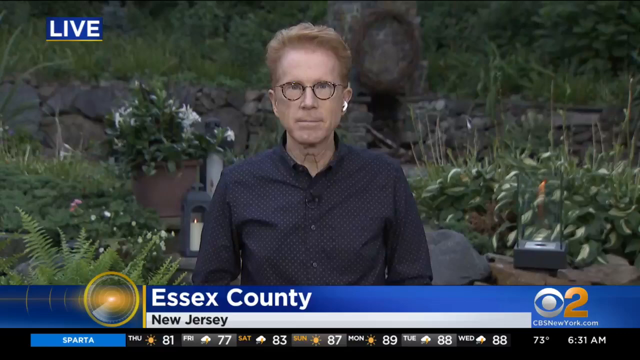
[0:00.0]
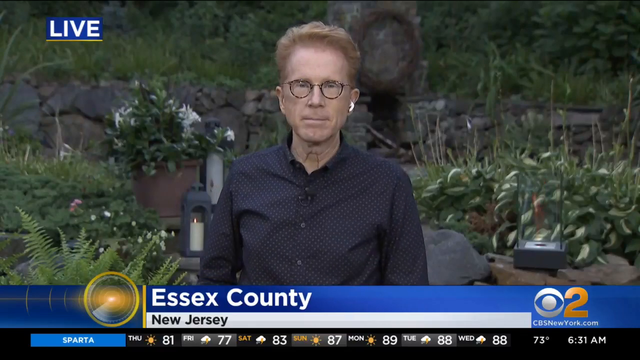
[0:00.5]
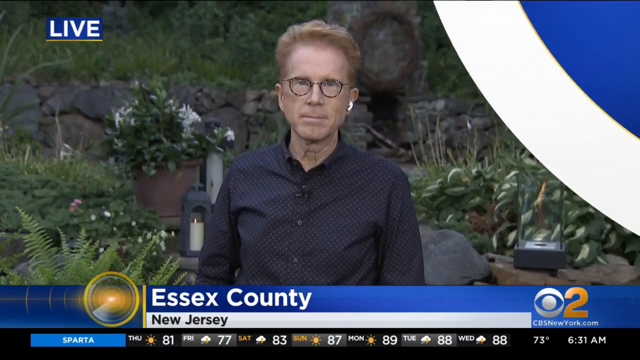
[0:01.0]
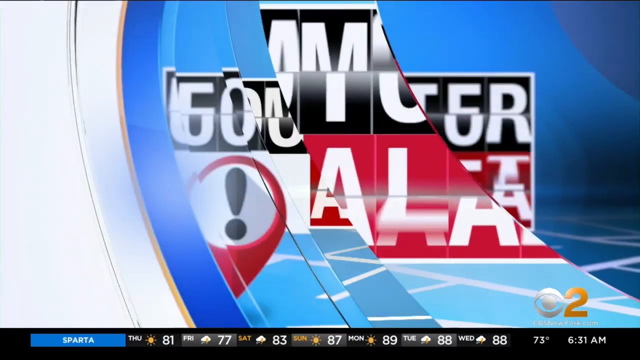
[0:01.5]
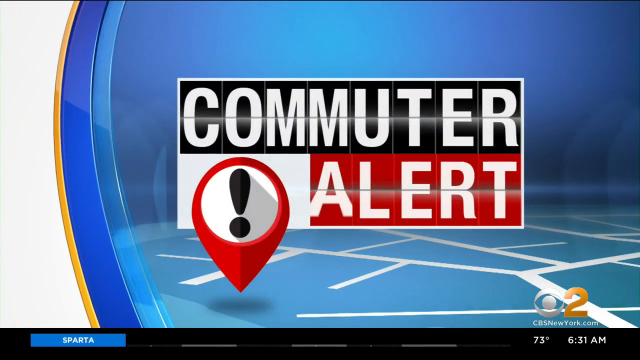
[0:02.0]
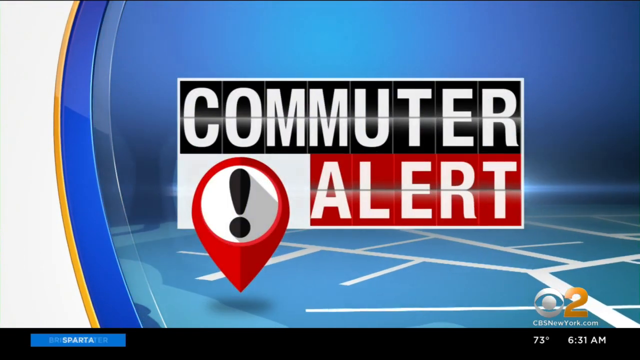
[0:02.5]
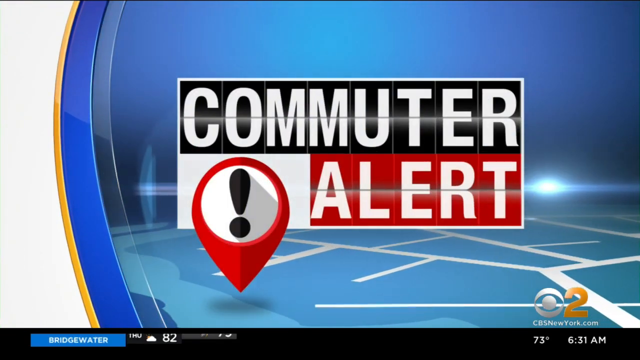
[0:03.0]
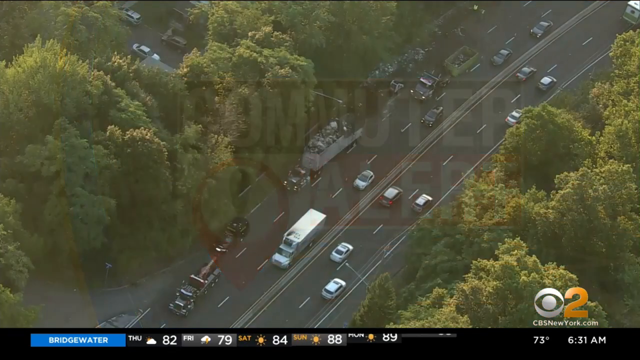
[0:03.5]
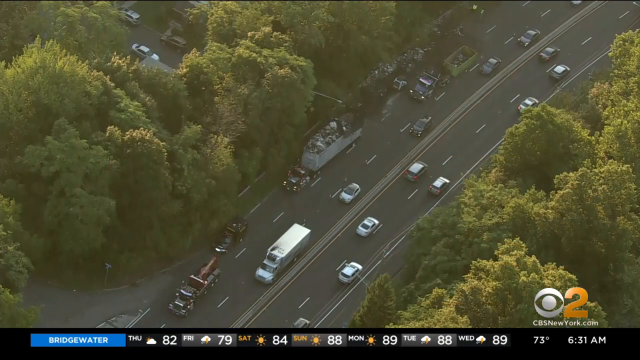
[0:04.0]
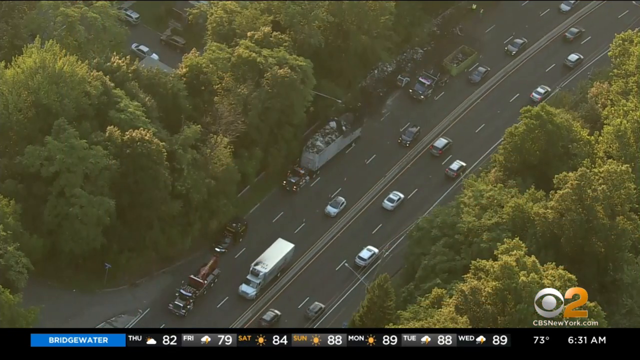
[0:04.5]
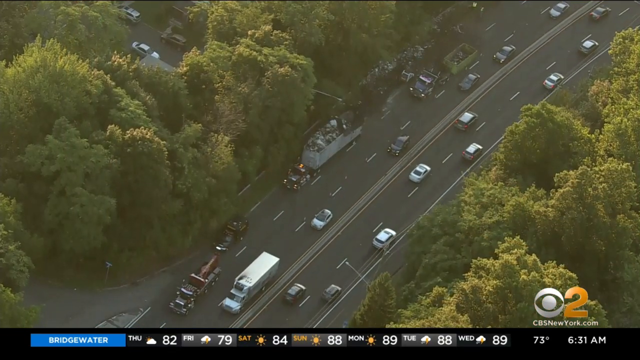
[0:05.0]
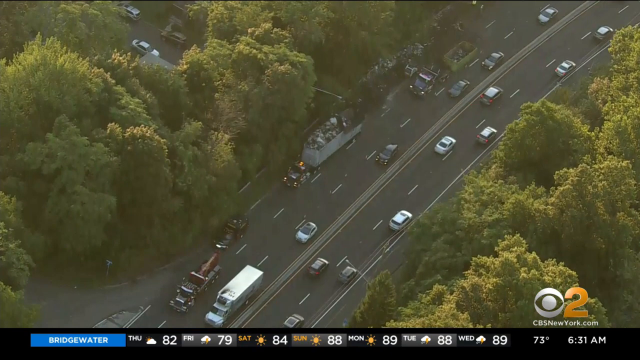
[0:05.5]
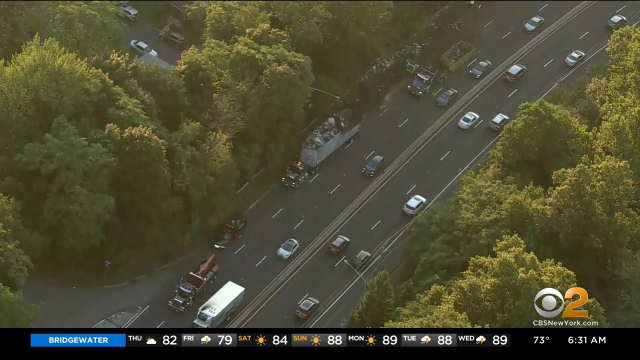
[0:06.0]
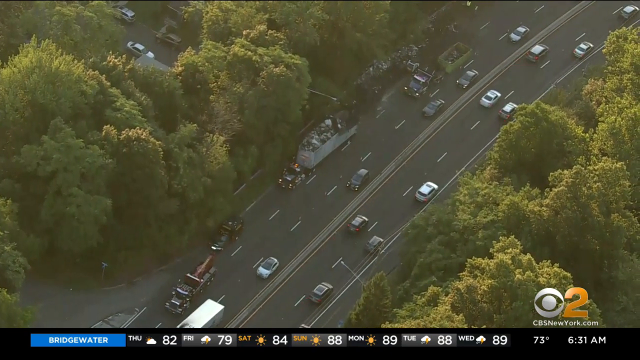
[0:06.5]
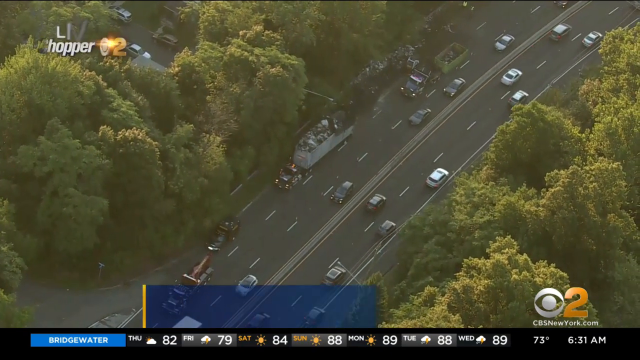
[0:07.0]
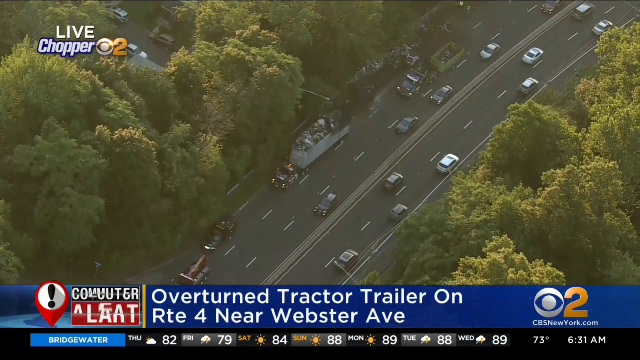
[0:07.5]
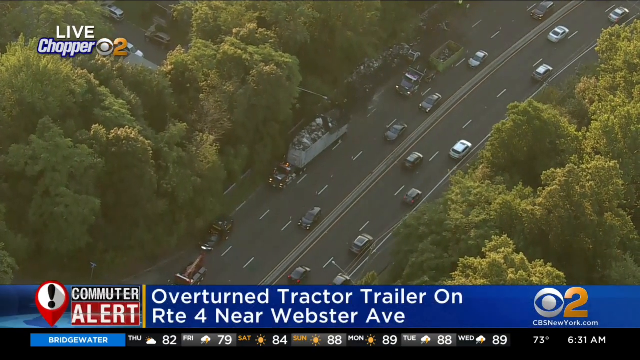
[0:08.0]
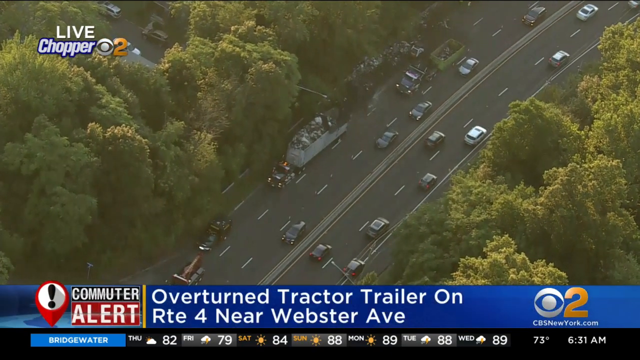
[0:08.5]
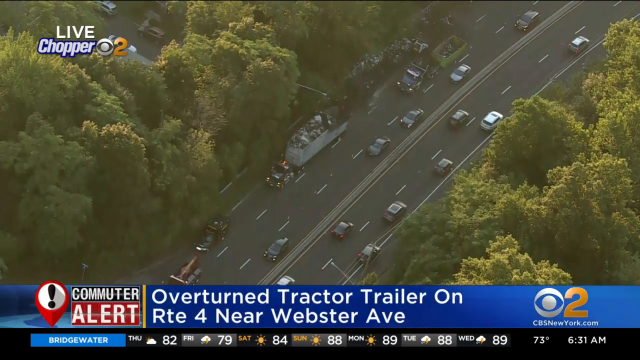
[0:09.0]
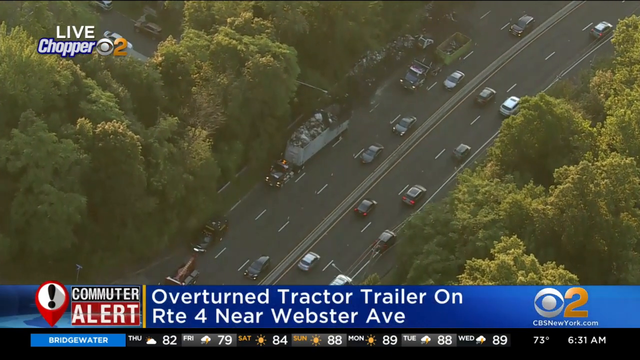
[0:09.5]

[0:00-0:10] A live news presentation from Essex County, New Jersey, shows an aerial feed from high in the sky of traffic on a highway, with cars moving along it. An overturned tractor trailer lies on RTE4 near Webster Avenue, and it is slowing down the traffic. The presenter is a middle-aged man wearing spectacles and a black shirt. Behind him is a garden background, and in the middle of the garden there is a mobile fireplace and a candle.